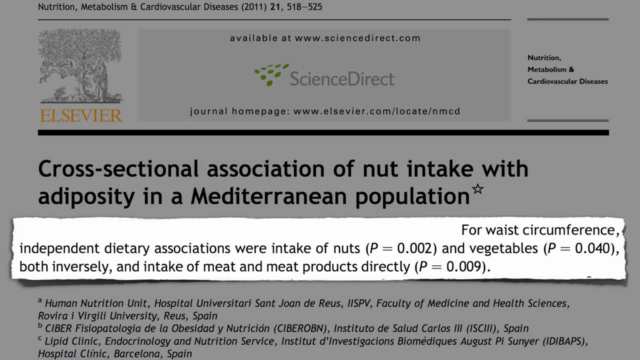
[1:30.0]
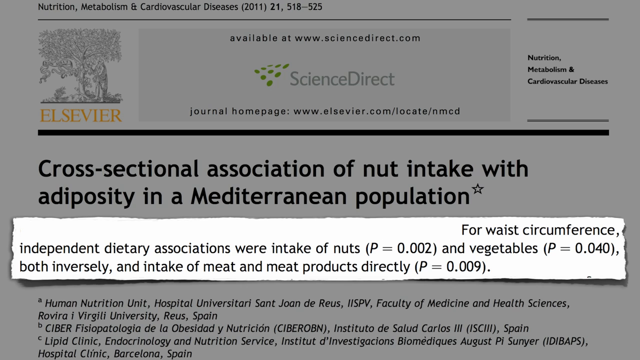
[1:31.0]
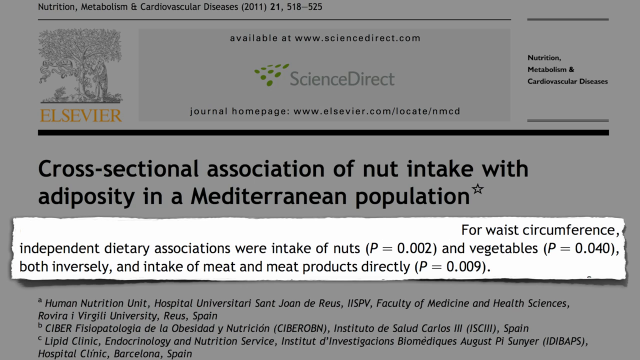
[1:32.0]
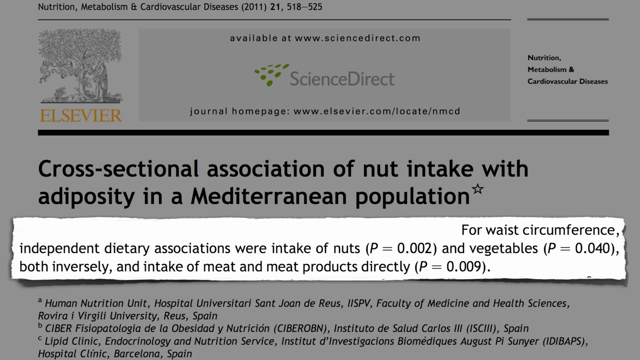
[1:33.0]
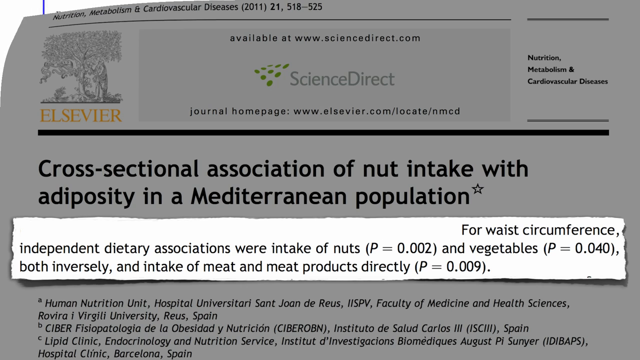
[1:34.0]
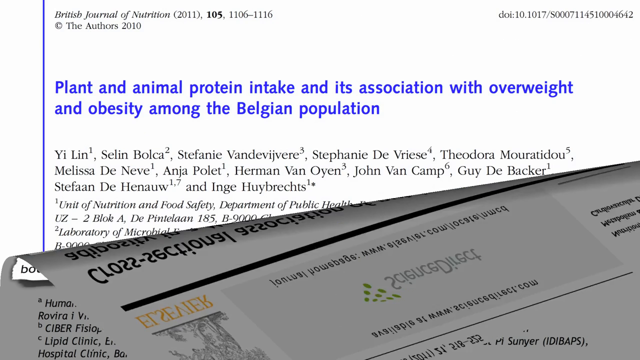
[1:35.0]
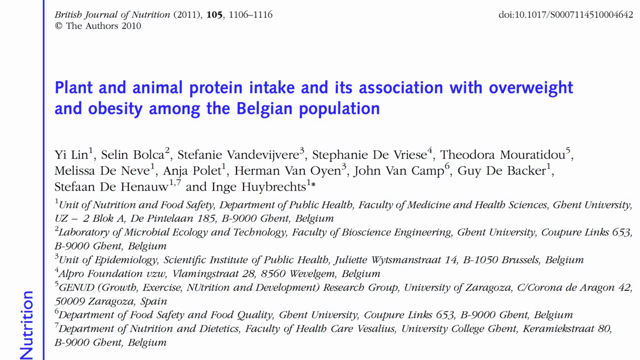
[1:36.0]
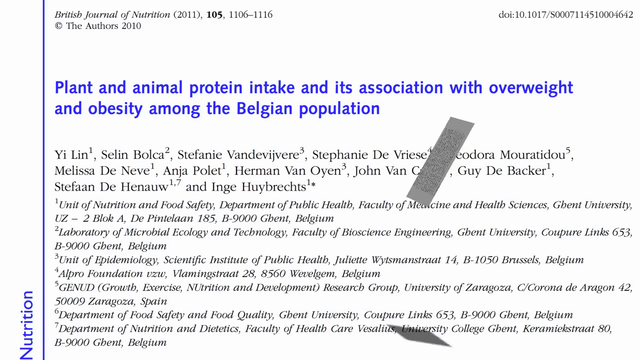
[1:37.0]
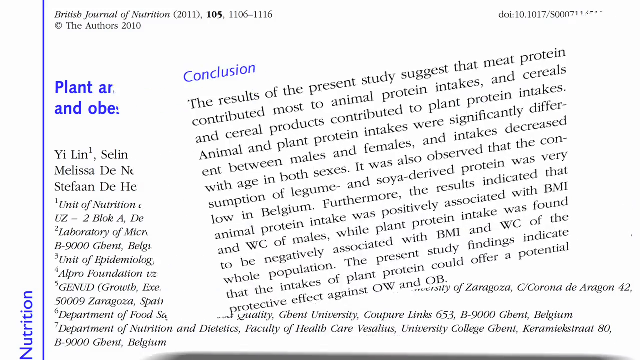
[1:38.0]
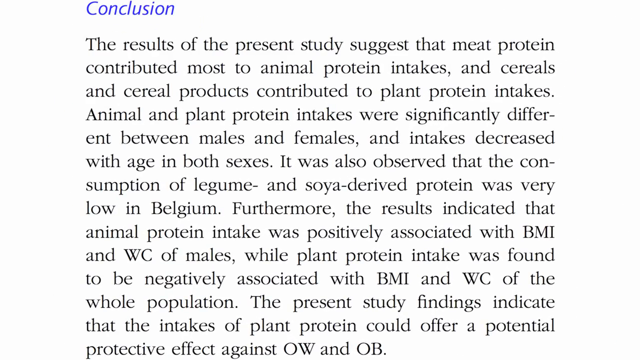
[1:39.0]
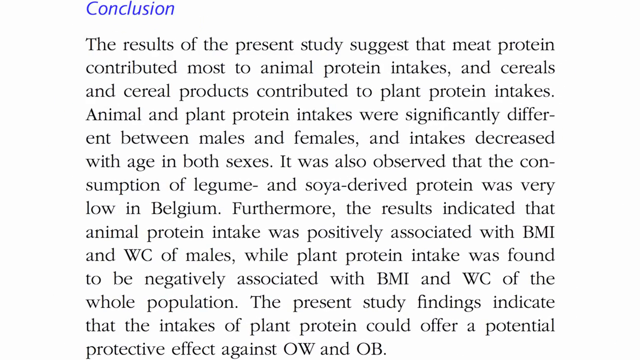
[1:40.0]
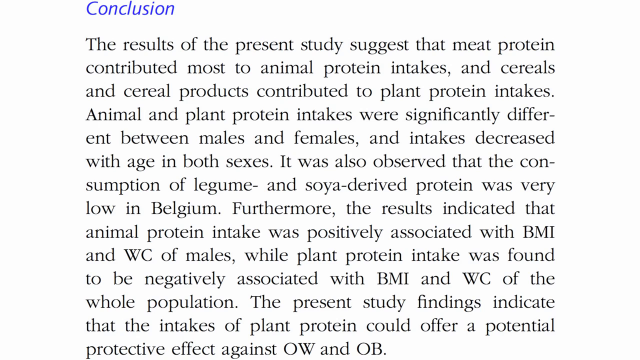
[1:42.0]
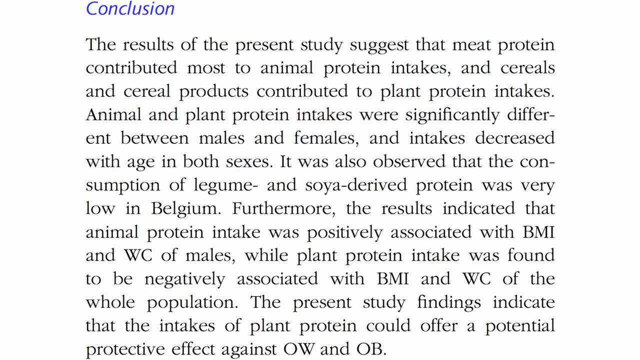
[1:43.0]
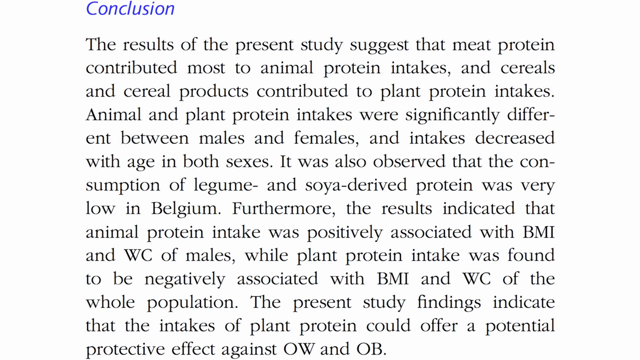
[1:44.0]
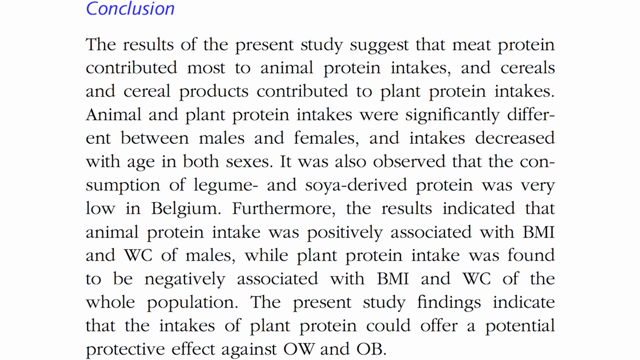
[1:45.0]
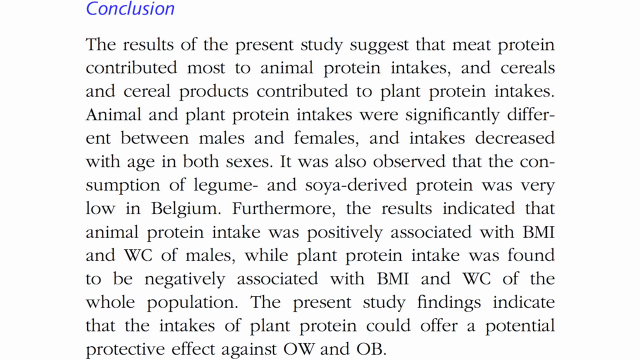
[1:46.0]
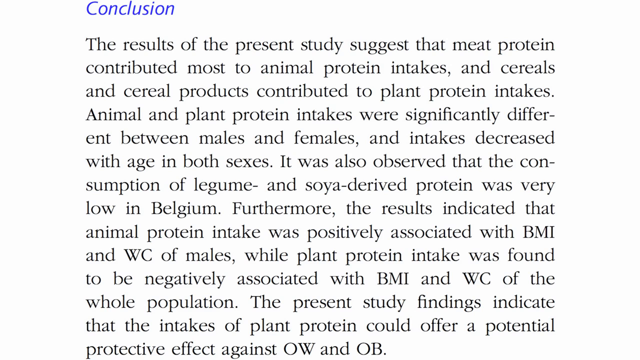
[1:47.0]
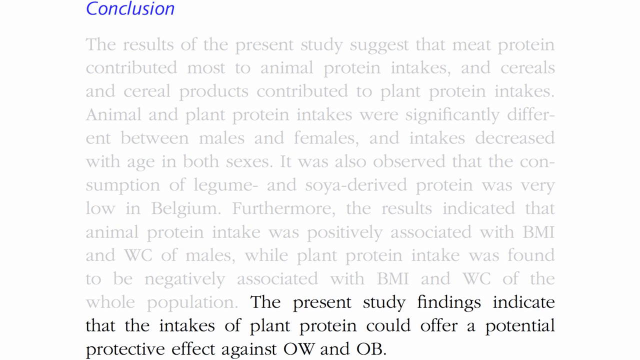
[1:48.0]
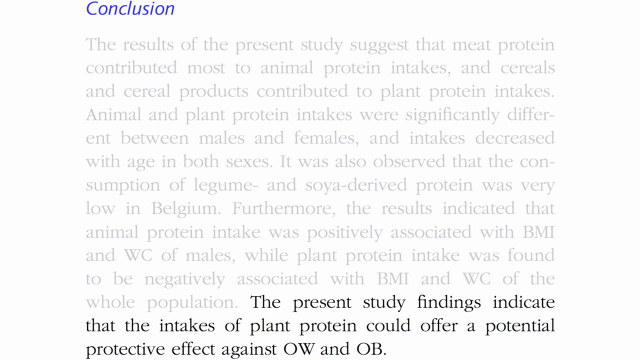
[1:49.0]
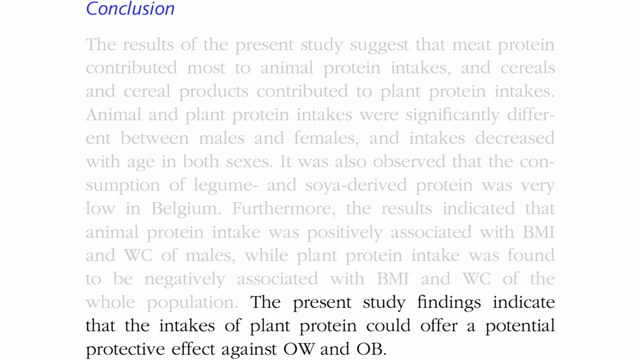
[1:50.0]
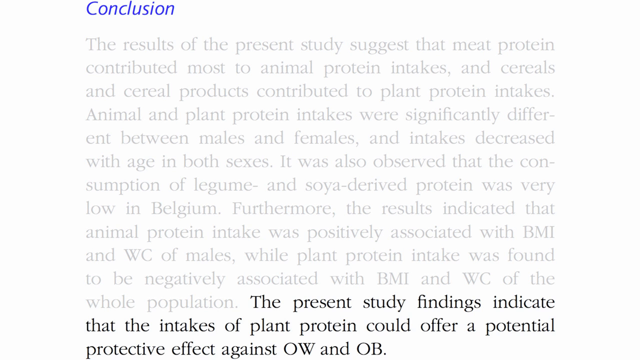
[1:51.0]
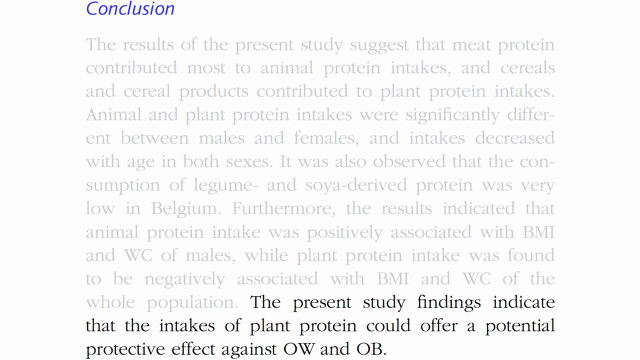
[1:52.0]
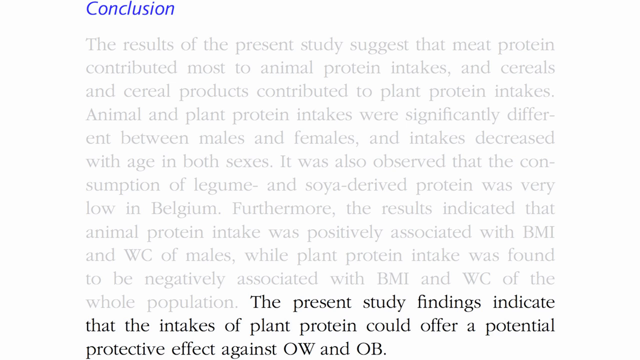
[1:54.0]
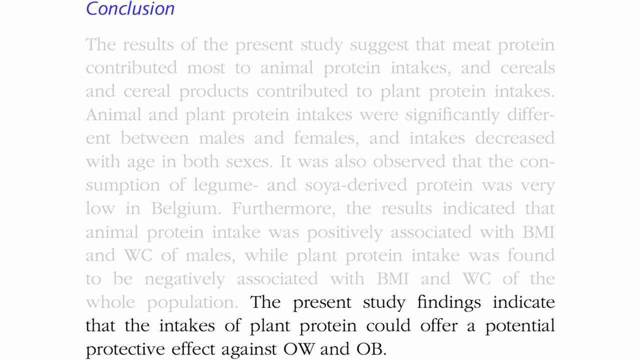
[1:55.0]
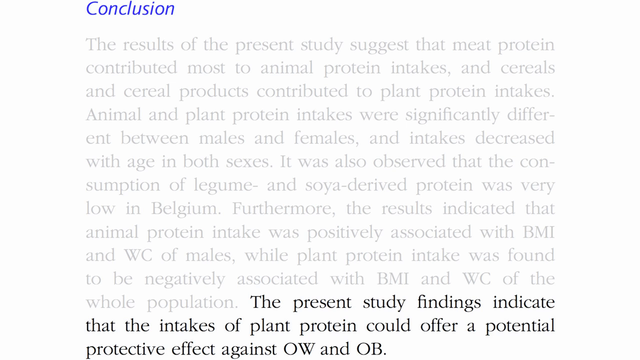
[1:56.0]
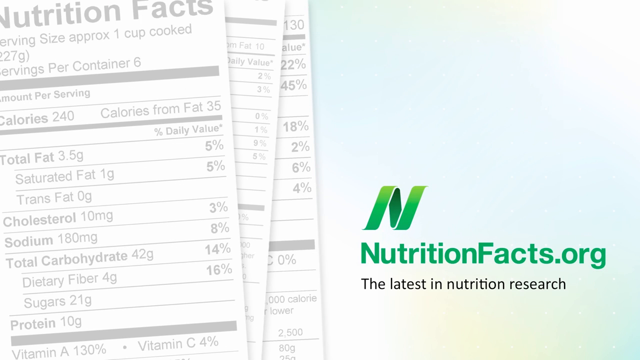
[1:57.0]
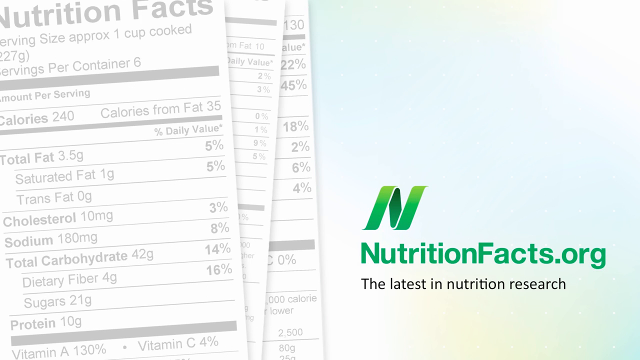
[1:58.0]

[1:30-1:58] An article that looks like an academic article from Science Direct is shown, with Science Direct kind of in the upper-central part and a layout styled like an academic article. Its title begins "Cross-Sectional Association of Nut Intake with" and ends "in a Mediterranean Population". A rectangular strip appears to highlight a portion of the article. The top of the page, more toward the upper left, then kind of peels down, revealing another academic article with "British Journal of Nutrition" in parentheses in the upper-left corner. Below it is a title about plant and animal protein intake and overweight and obesity among Belgians. Animated boxes take pieces of the articles and bring them forward as highlights.